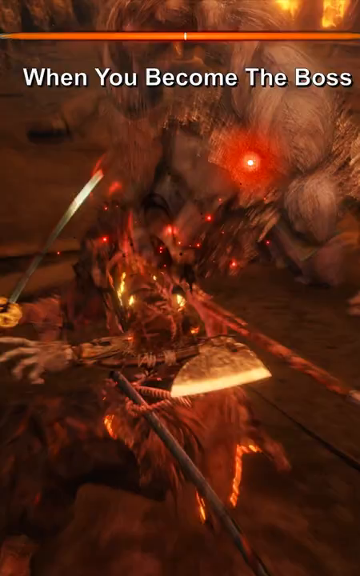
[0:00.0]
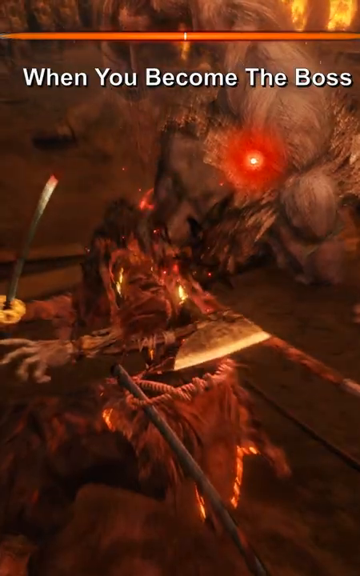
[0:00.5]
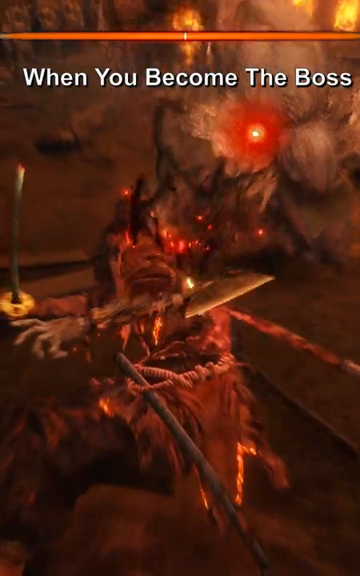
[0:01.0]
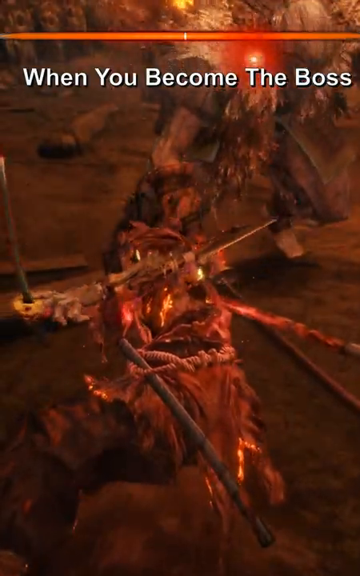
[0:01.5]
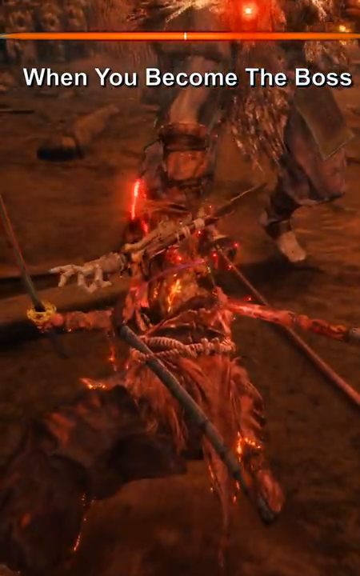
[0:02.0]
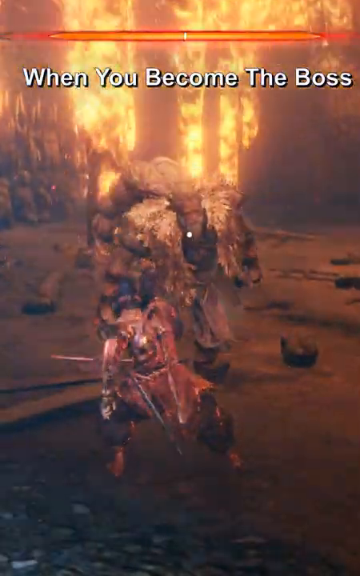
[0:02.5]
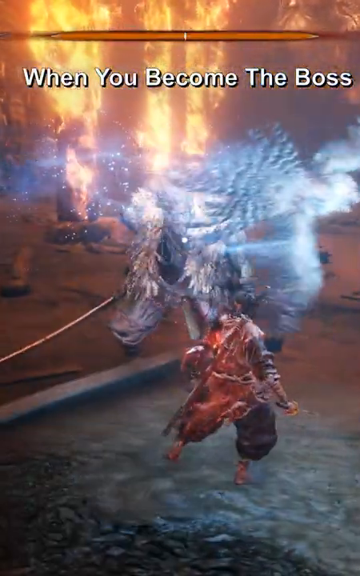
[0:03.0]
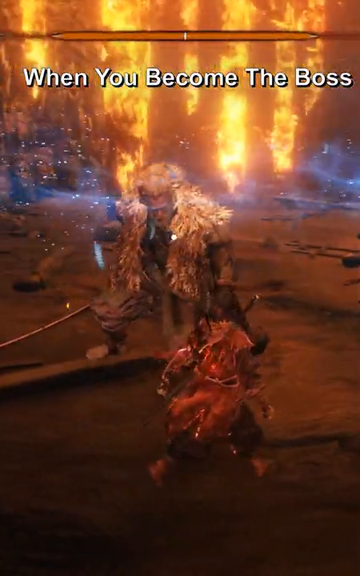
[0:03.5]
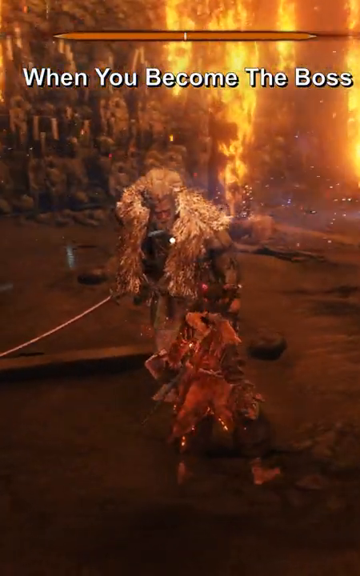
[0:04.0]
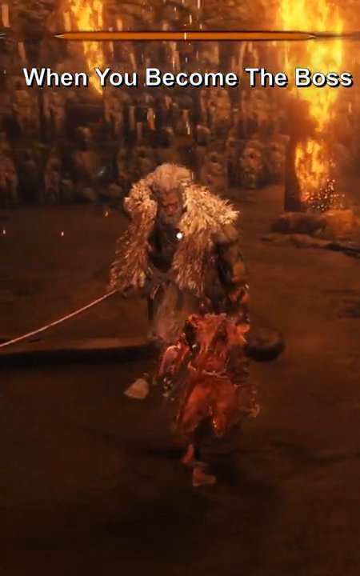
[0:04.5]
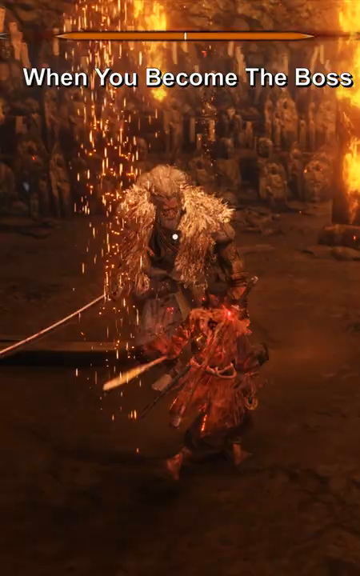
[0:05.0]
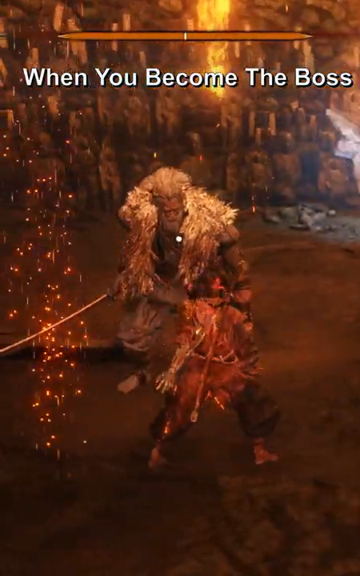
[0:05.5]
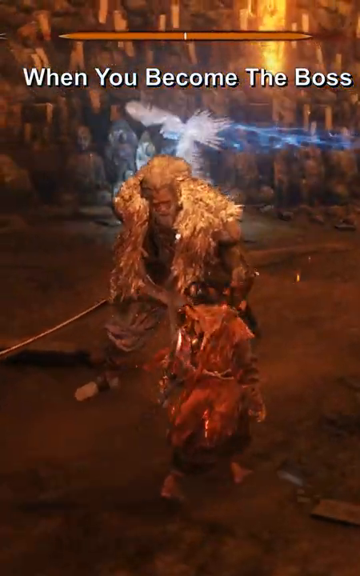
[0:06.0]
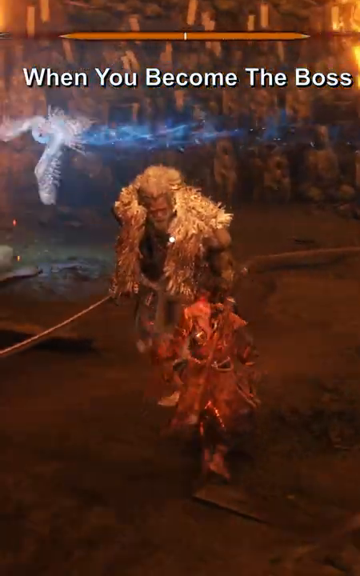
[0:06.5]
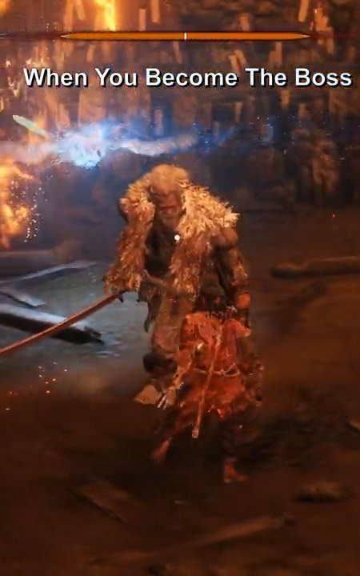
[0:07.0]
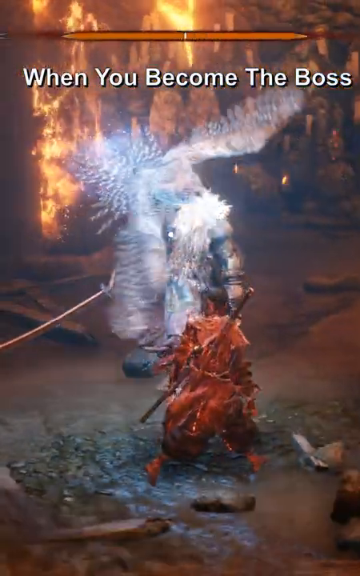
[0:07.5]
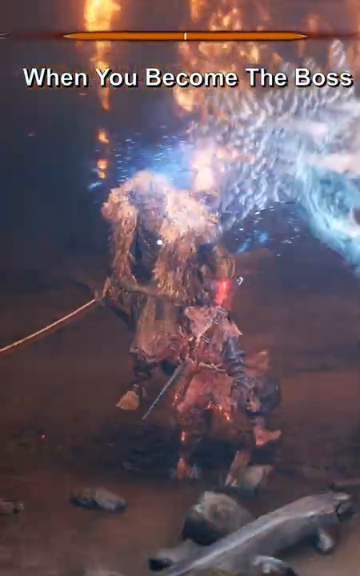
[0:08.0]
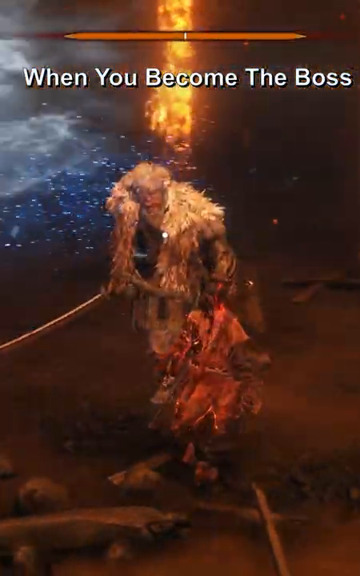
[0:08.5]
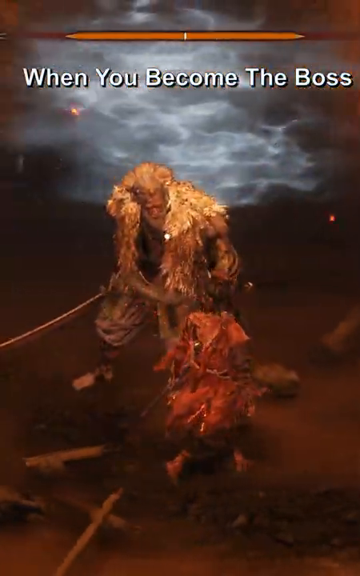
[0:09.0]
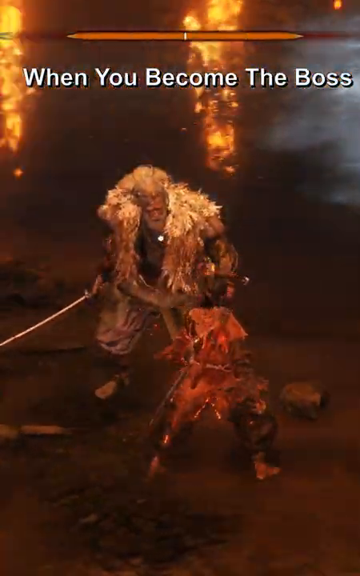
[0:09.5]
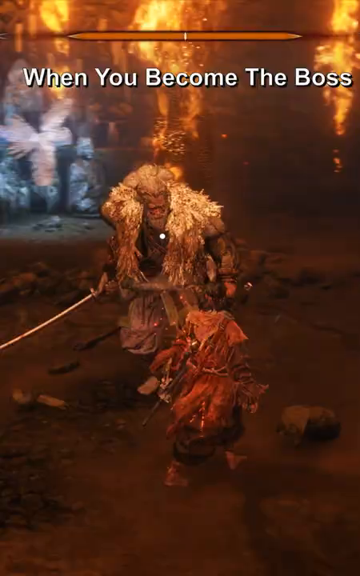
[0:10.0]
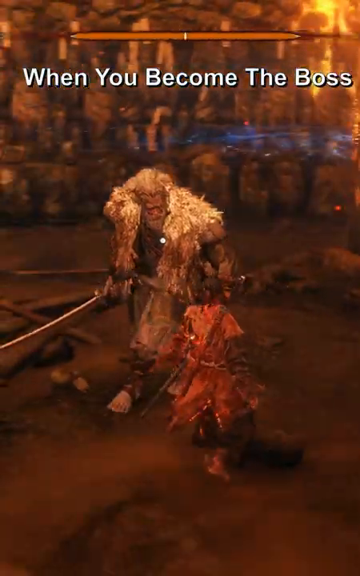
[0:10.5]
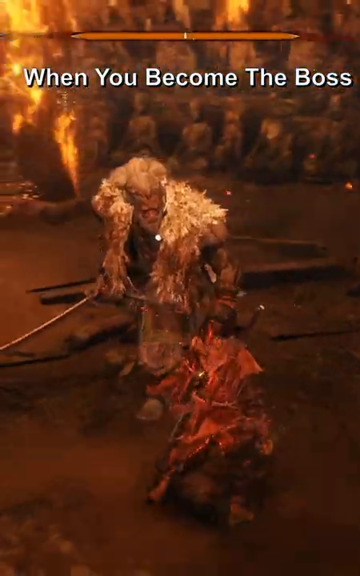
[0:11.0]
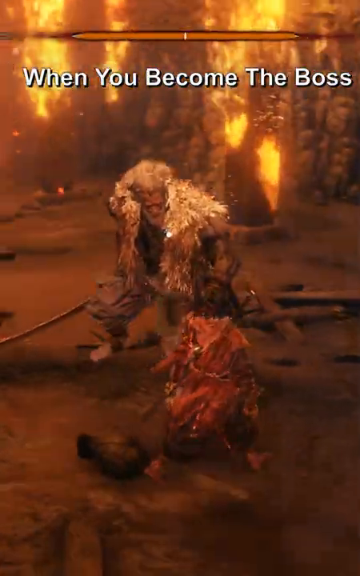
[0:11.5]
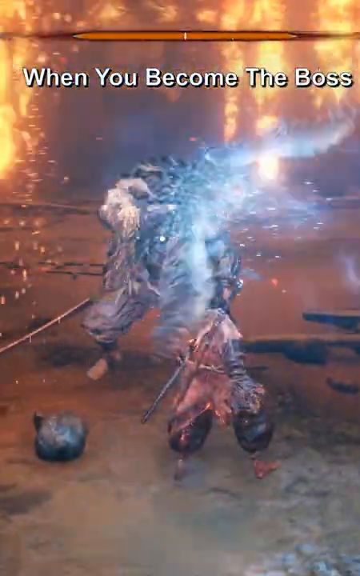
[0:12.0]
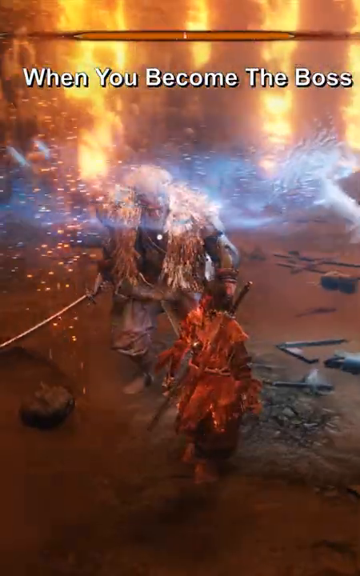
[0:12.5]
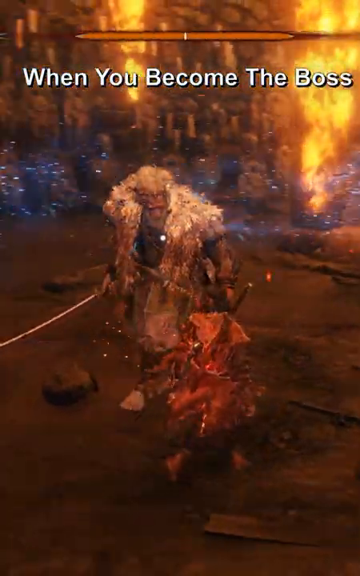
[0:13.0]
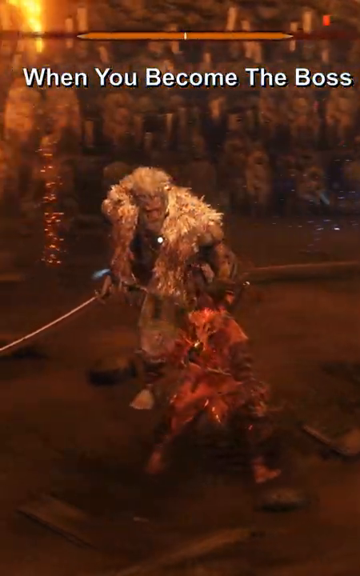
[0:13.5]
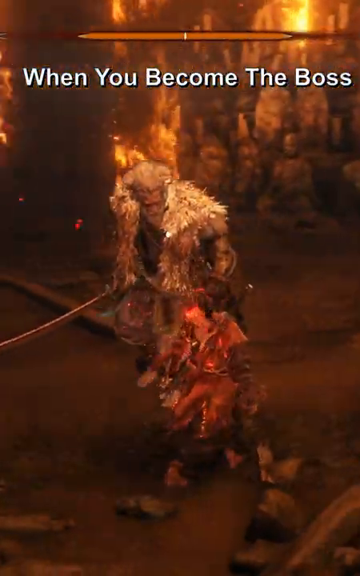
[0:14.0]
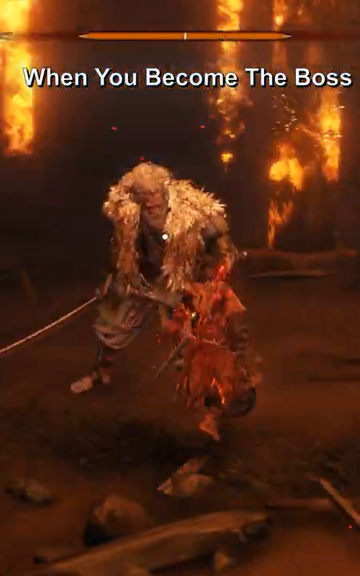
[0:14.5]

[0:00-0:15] The video is a YouTube video titled "When you become the boss," apparently from an account called Wasted, which has 135k subscribers. After the title, there appear to be two main characters. One looks like a giant and wears what is almost some type of gold vest, with something that may be feathers or hair, though it is unclear what it is supposed to be. The other character wears a longer red jacket, possibly silk, and black pants. Both characters appear to each have a sword. The game view circles around them; they are not really fighting yet but are sort of facing off. A few seconds in, what appears to be a white owl flies over them; it looks like a bird and appears to be glowing, as if it has some type of properties. The setting appears to be a dark cave, with fire going up and down the walls. At the very end, the two characters sort of begin to really move toward each other in slow motion.